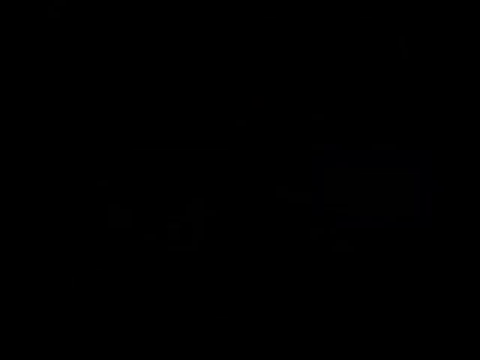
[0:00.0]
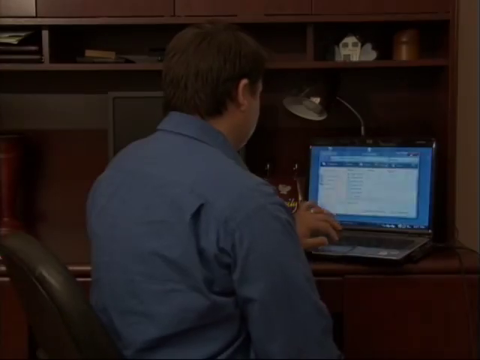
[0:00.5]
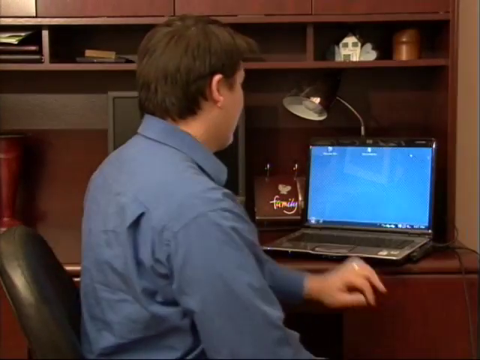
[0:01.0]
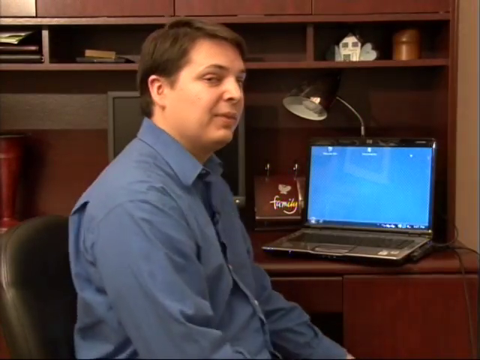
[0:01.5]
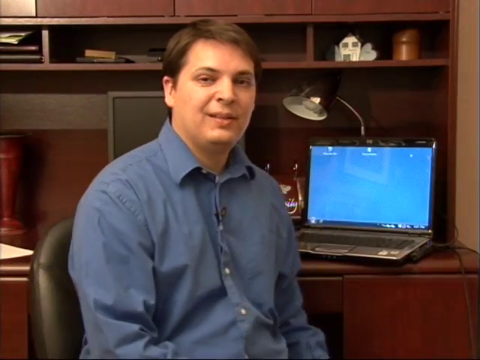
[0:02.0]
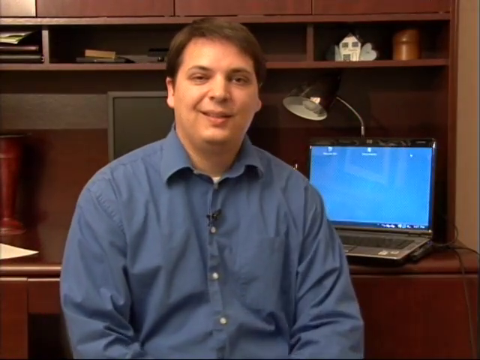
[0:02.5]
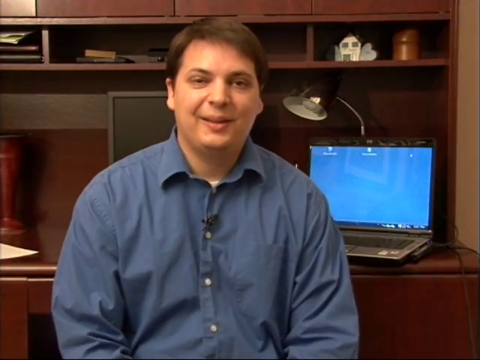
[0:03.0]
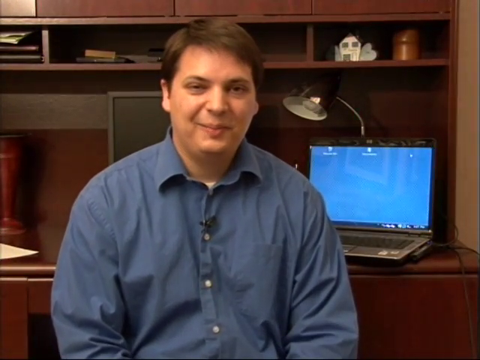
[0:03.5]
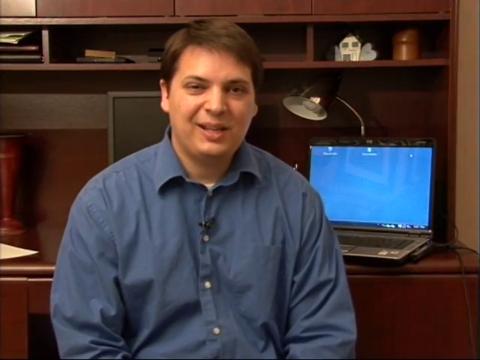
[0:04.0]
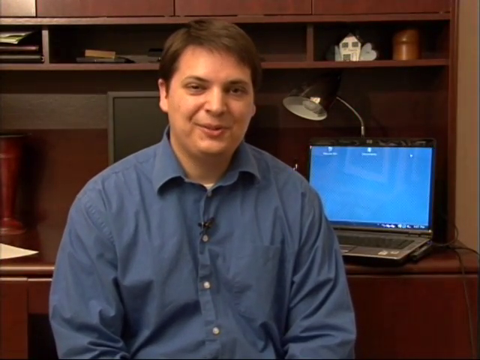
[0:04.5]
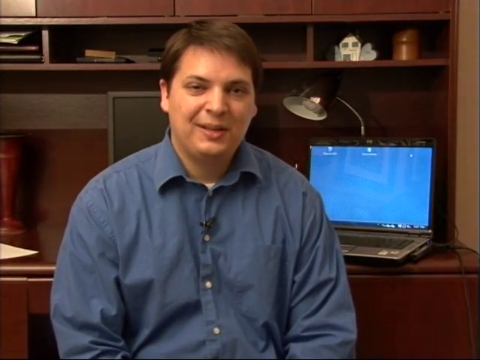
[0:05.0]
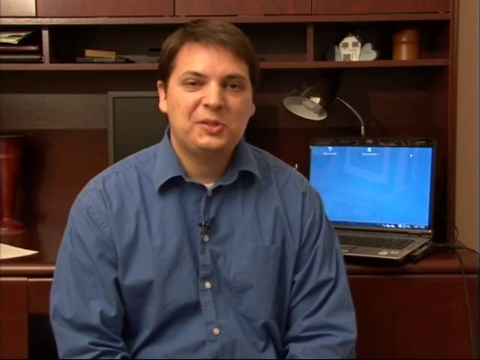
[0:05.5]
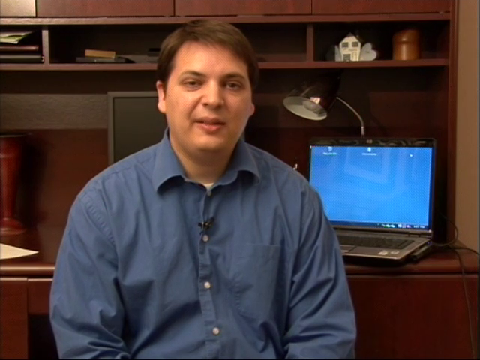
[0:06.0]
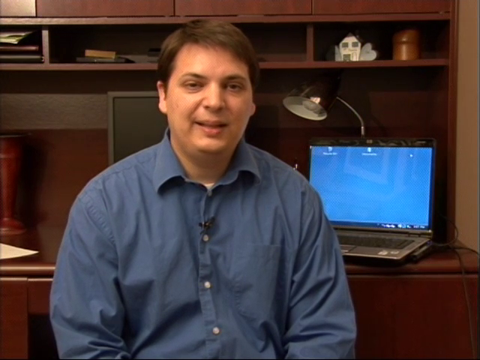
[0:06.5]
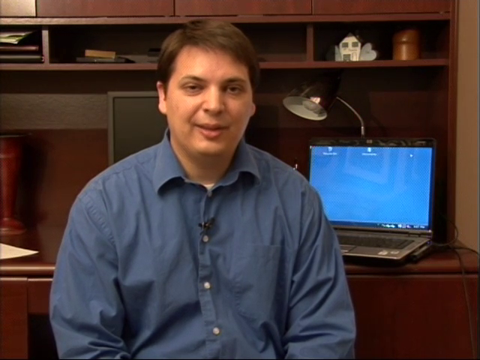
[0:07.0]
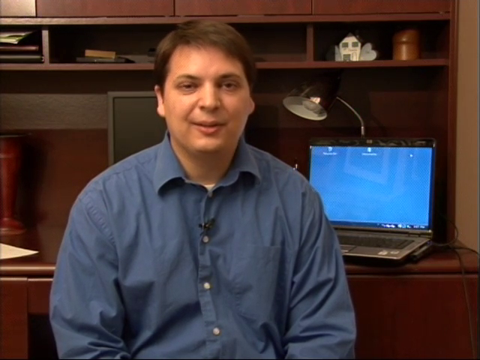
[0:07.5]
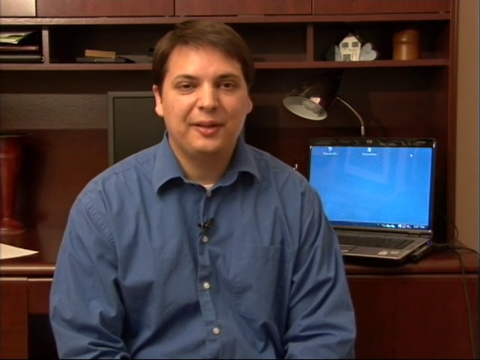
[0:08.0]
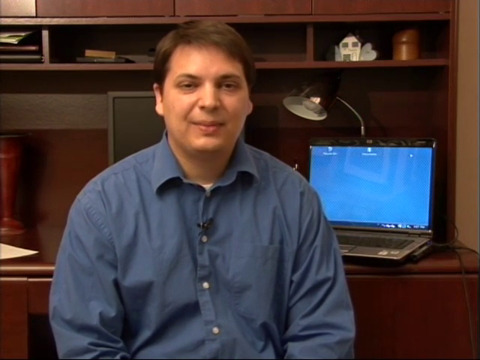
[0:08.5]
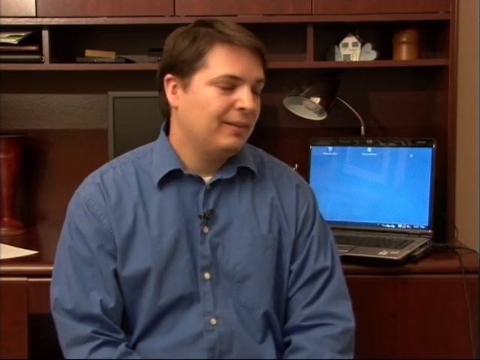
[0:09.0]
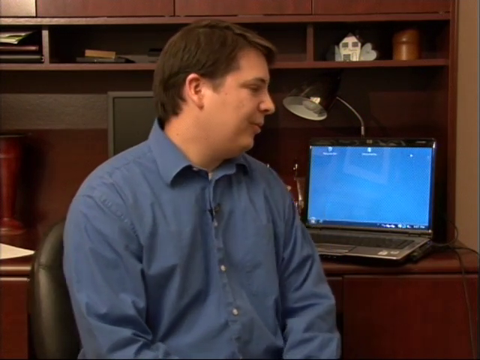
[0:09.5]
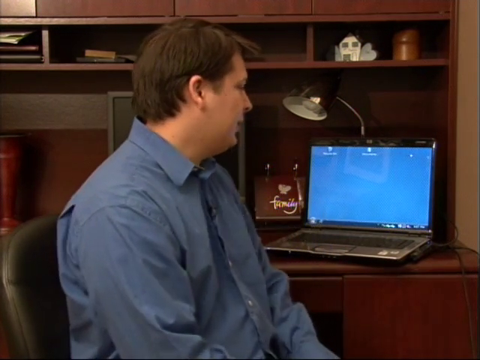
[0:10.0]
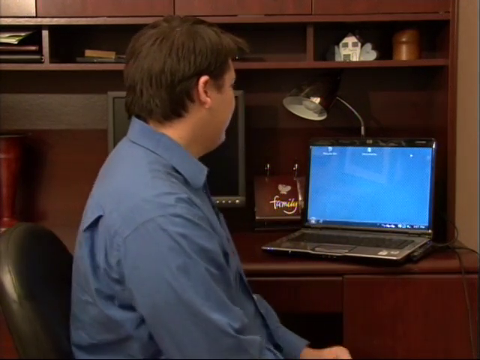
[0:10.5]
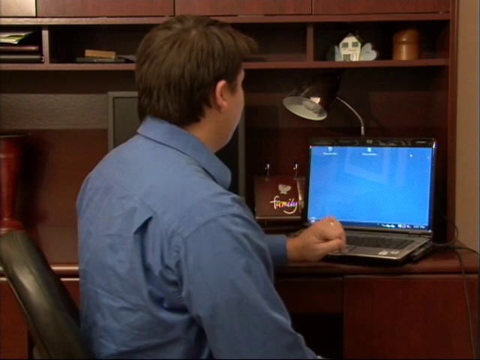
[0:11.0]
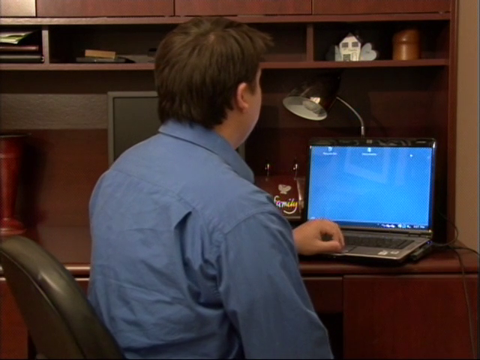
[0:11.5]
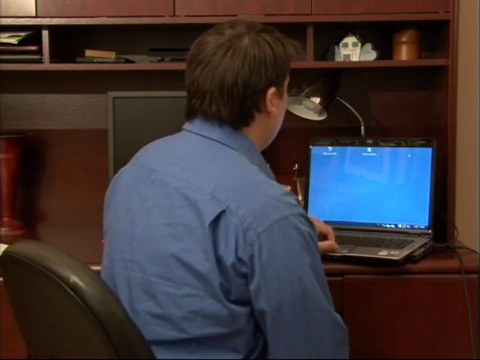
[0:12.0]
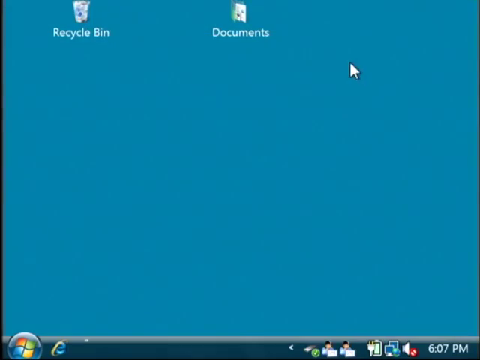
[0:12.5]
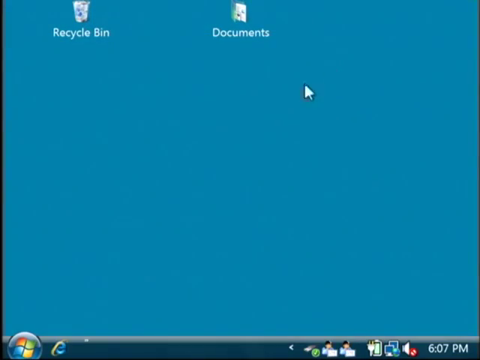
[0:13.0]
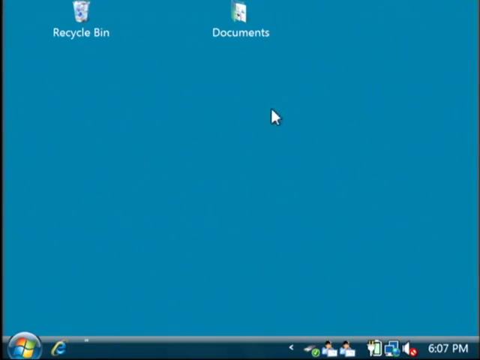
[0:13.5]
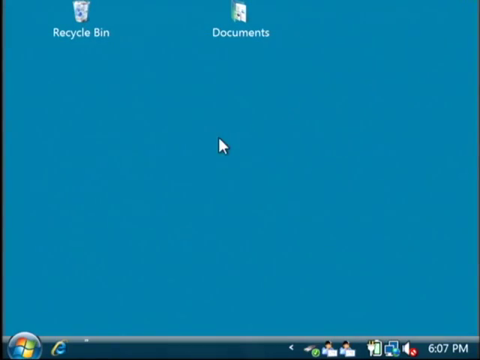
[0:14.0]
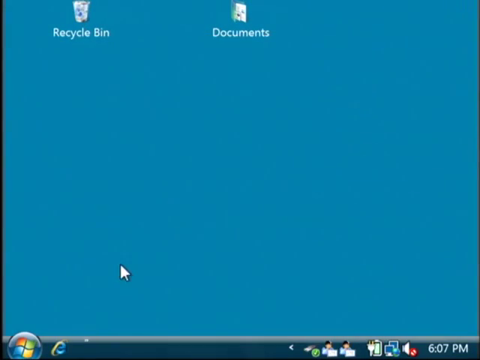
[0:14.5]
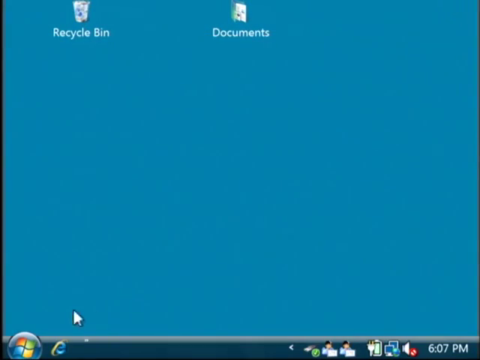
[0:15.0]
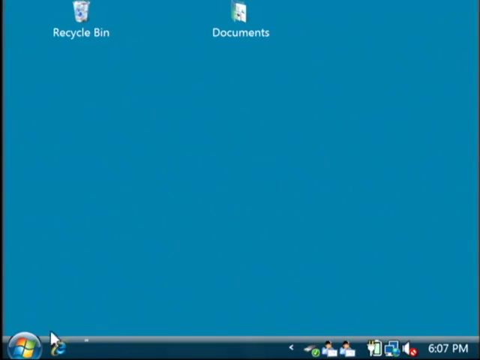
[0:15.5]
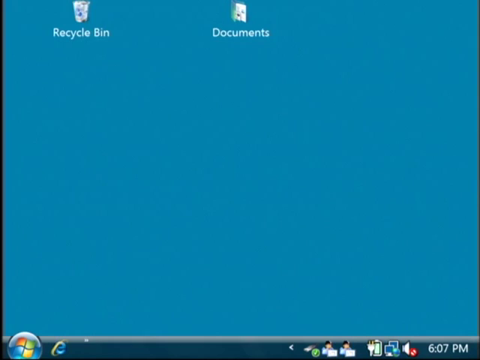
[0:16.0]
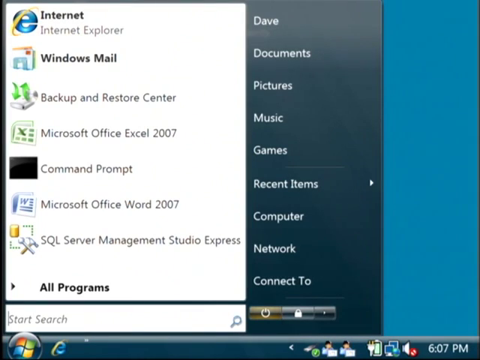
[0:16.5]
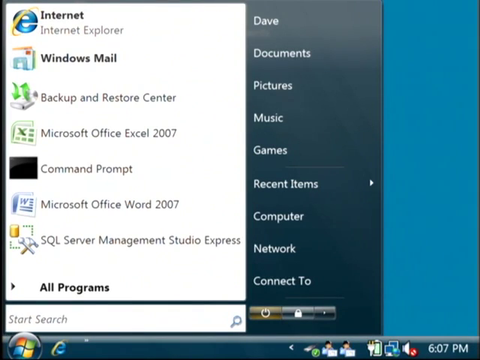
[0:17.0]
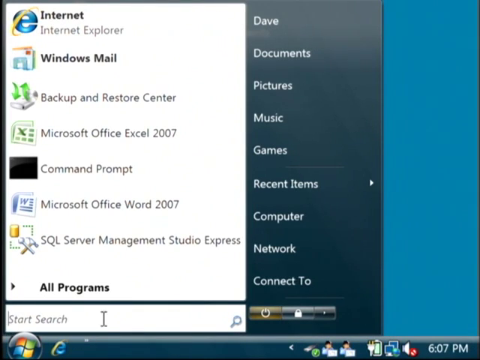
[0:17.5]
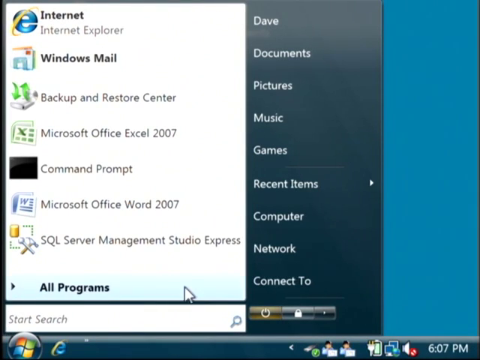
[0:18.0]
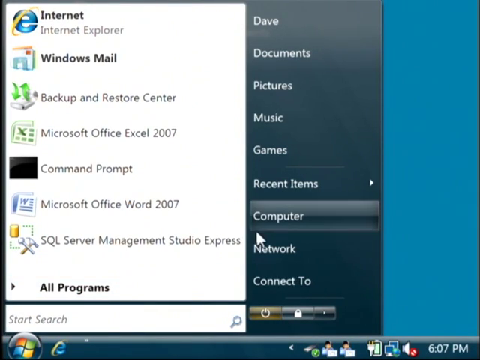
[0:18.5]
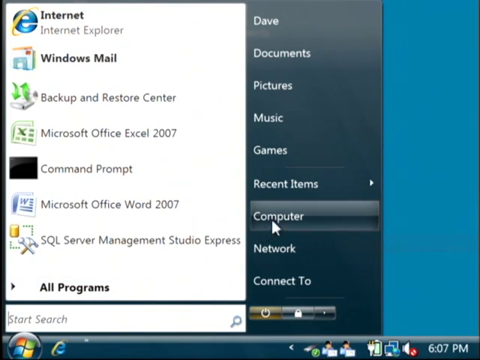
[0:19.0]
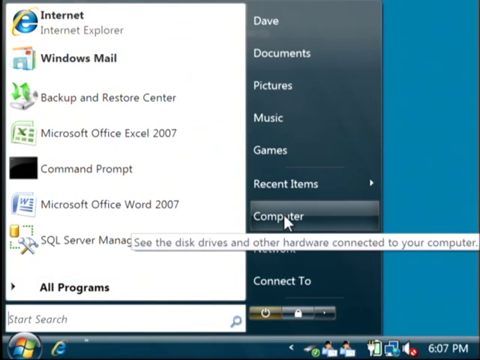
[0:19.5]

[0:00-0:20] A man is in his office with a laptop on a wooden desk. At first he has his back to the camera, his left hand up and reaching towards the laptop. He turns around to face the camera; he wears a blue shirt, is probably about 30, and has short dark hair and a smile. He spends a good four or five seconds speaking to the camera, then, sitting on a chair, spins the chair back to the laptop and places his left hand on the keyboard. The computer screen then fills the view, showing the Windows blue background, and the mouse pointer moves from the top right to the bottom left. A list of all programs comes up, with Dave, documents, pictures, music and various other sections of files. He chooses computer.